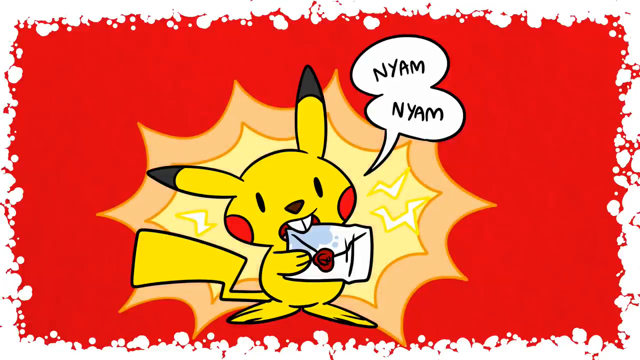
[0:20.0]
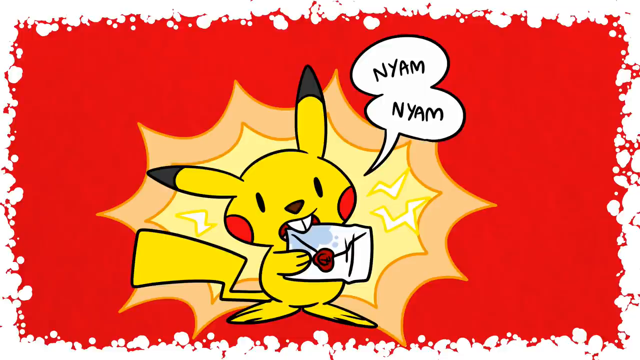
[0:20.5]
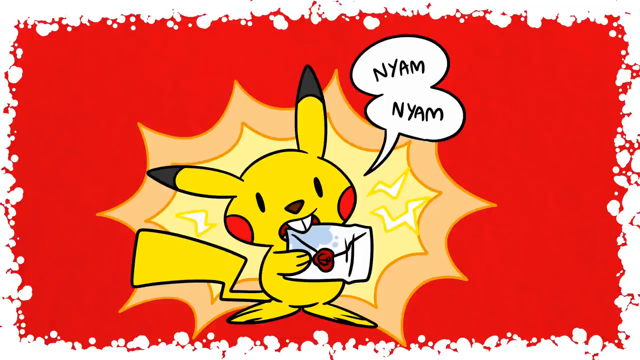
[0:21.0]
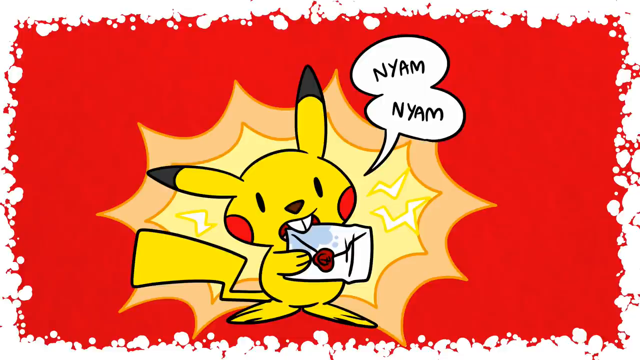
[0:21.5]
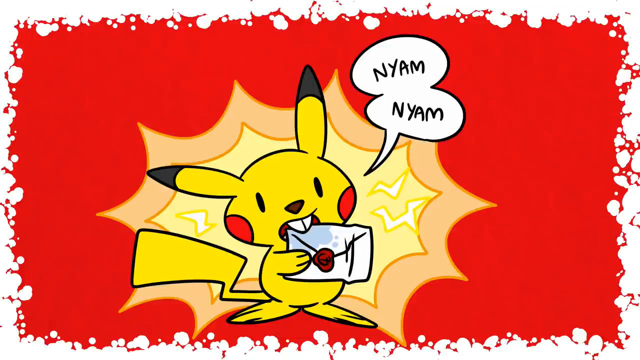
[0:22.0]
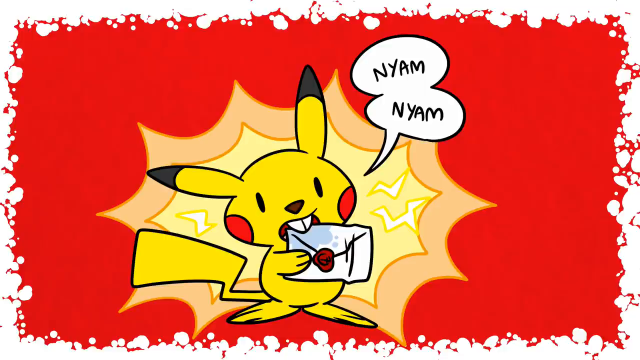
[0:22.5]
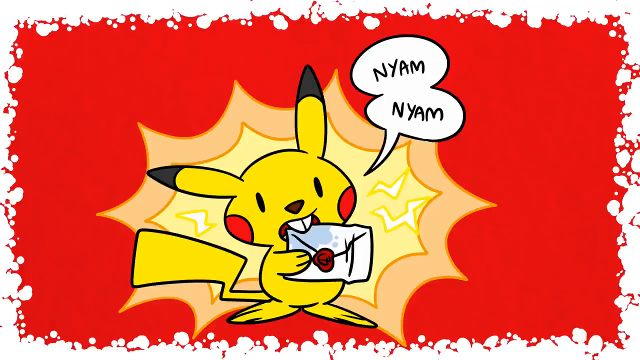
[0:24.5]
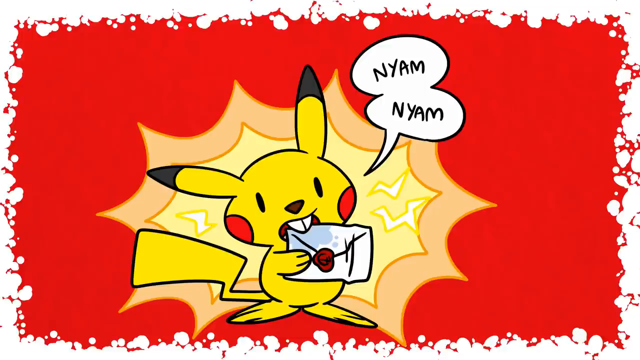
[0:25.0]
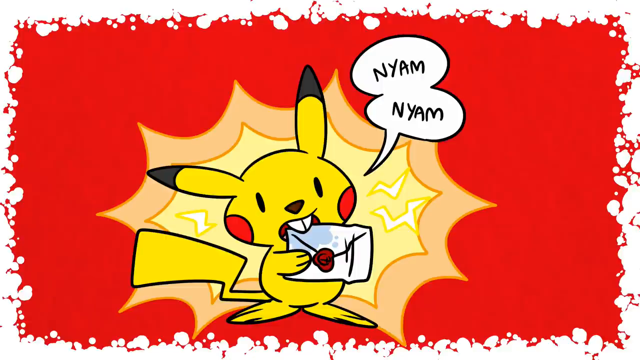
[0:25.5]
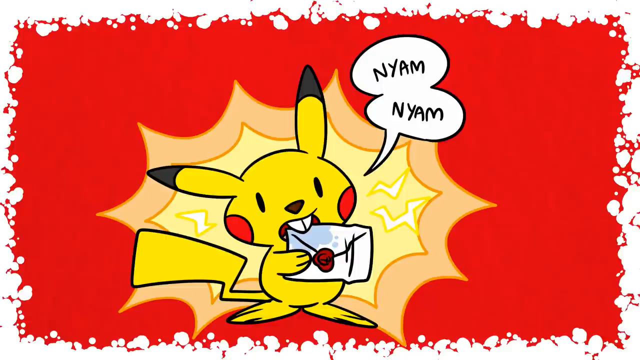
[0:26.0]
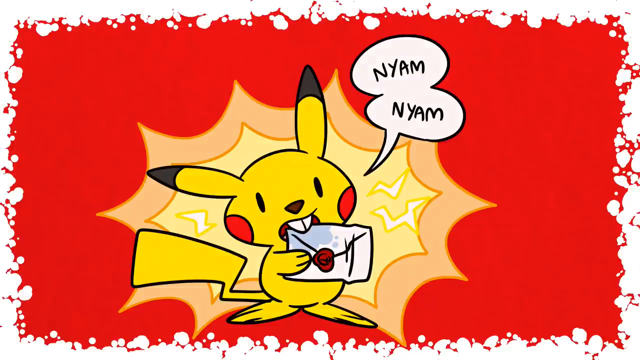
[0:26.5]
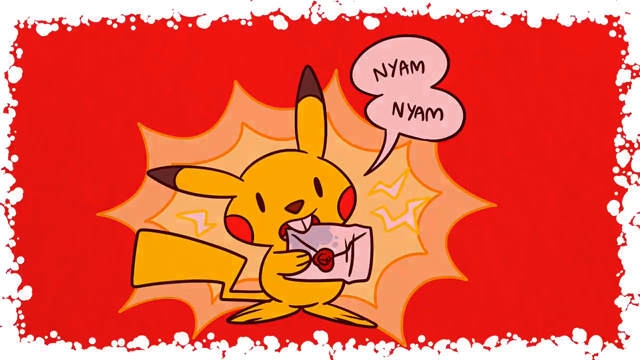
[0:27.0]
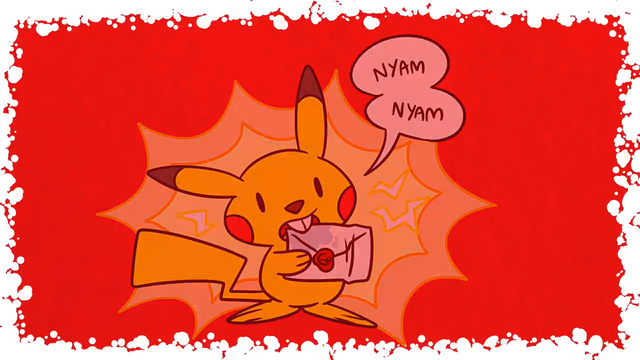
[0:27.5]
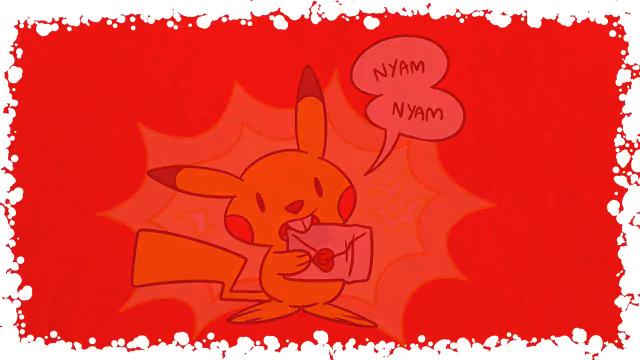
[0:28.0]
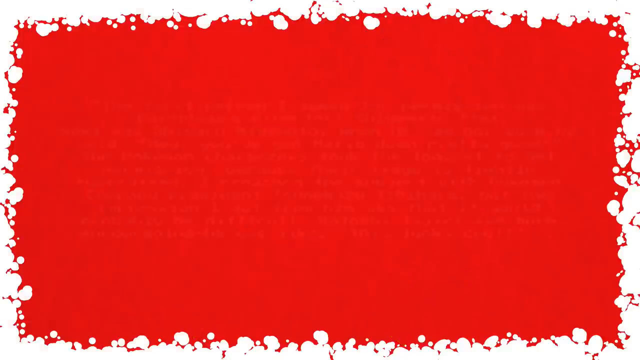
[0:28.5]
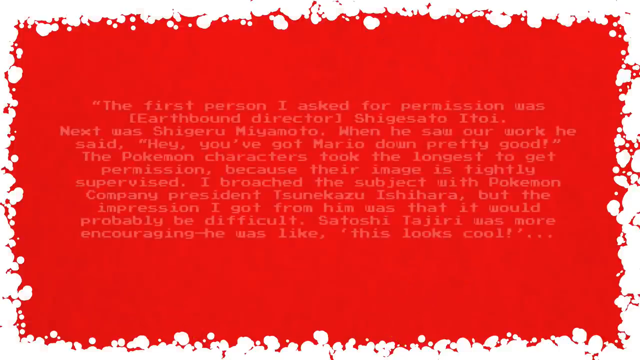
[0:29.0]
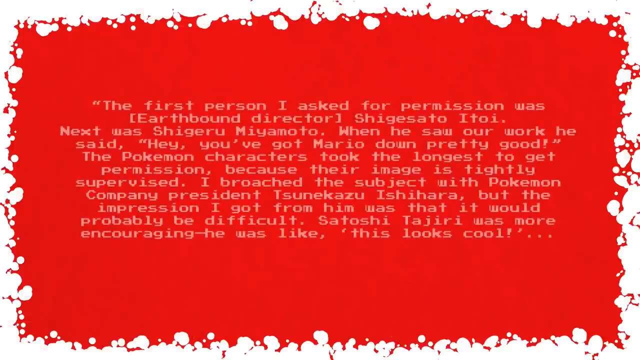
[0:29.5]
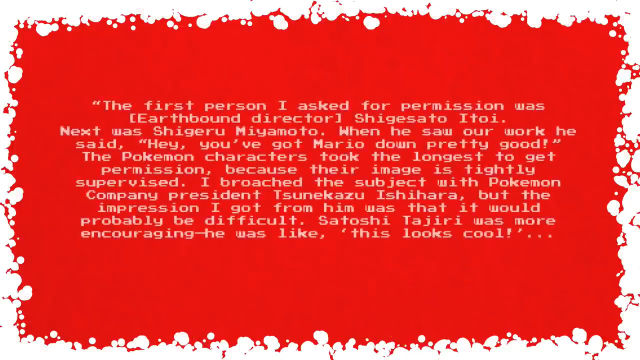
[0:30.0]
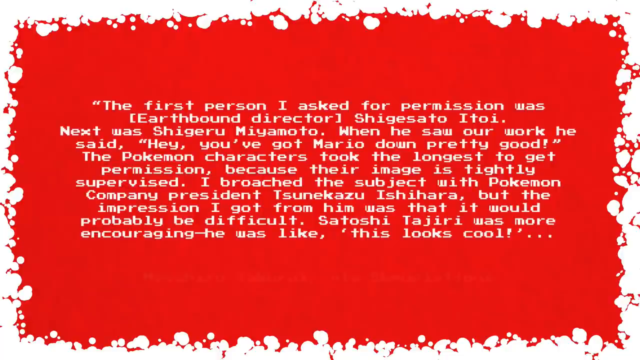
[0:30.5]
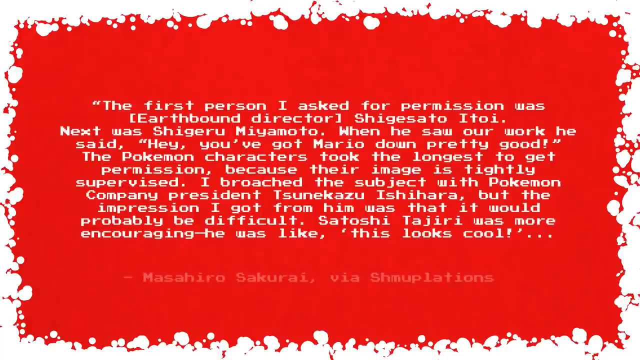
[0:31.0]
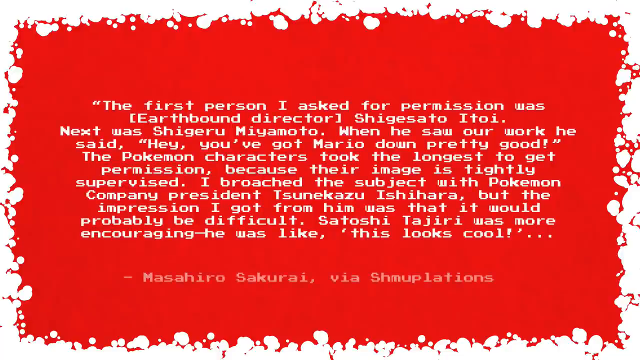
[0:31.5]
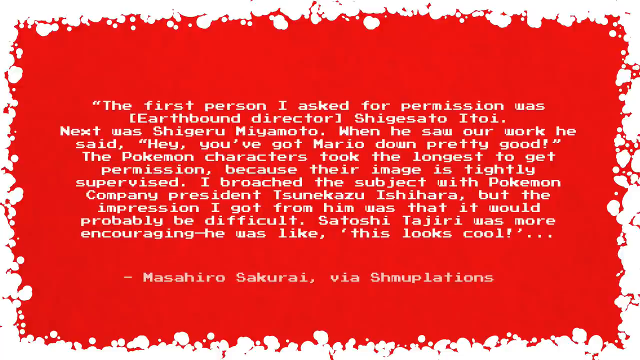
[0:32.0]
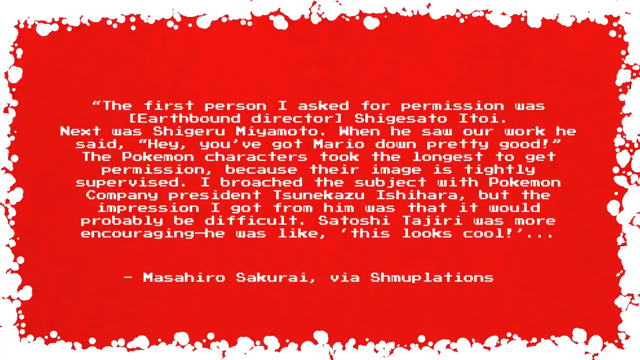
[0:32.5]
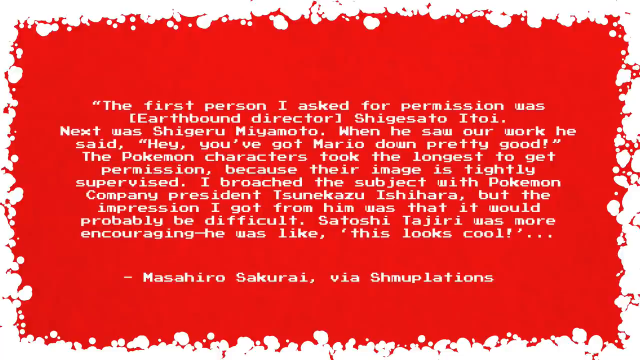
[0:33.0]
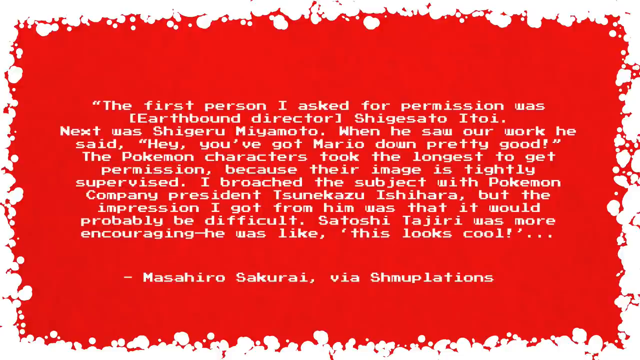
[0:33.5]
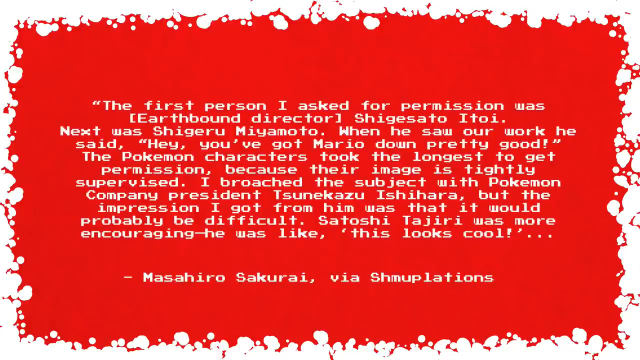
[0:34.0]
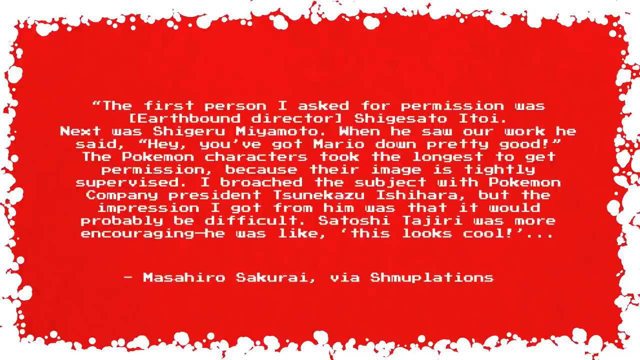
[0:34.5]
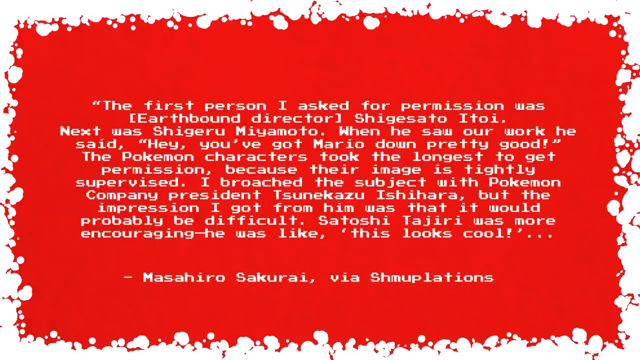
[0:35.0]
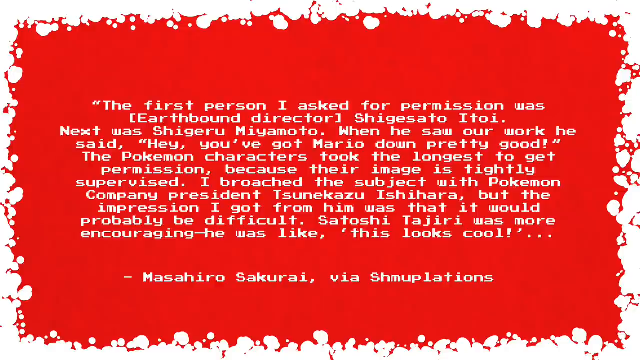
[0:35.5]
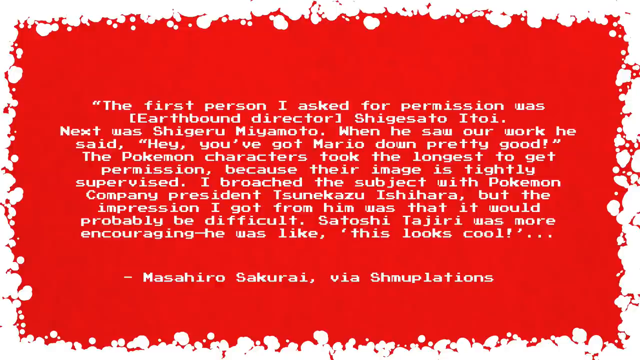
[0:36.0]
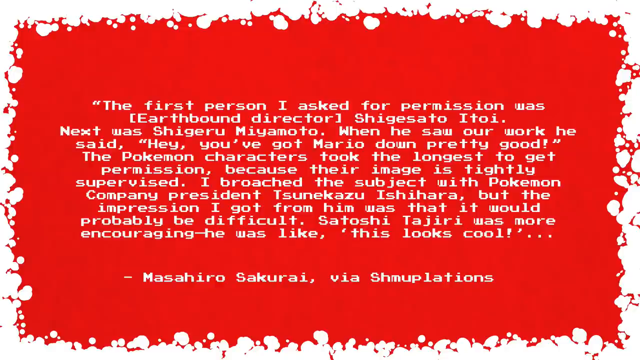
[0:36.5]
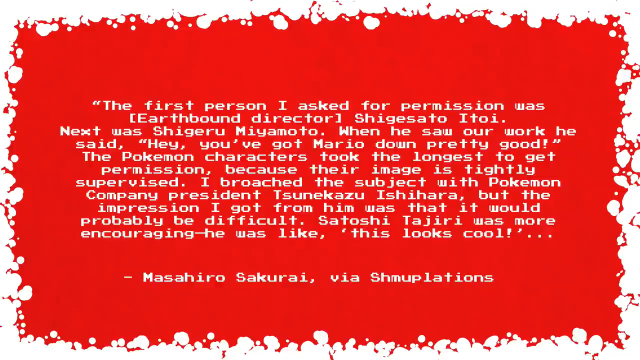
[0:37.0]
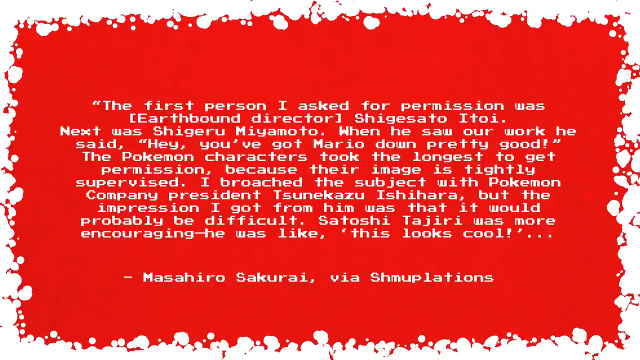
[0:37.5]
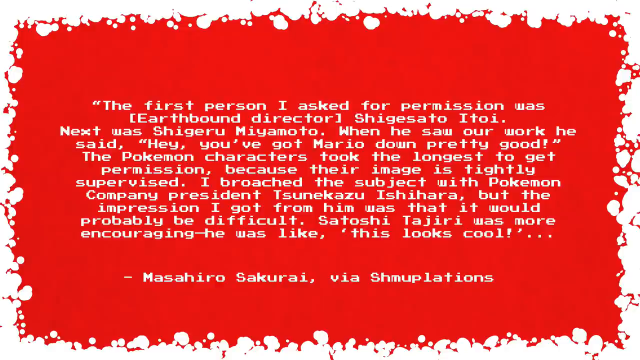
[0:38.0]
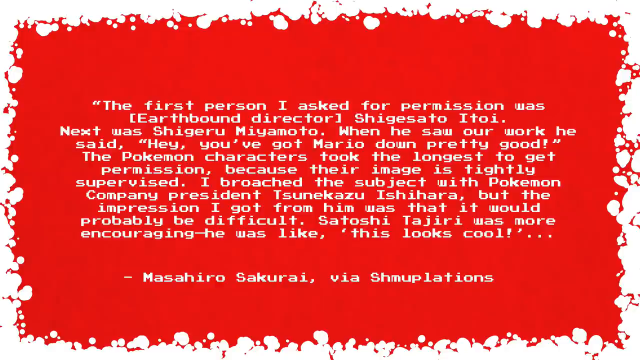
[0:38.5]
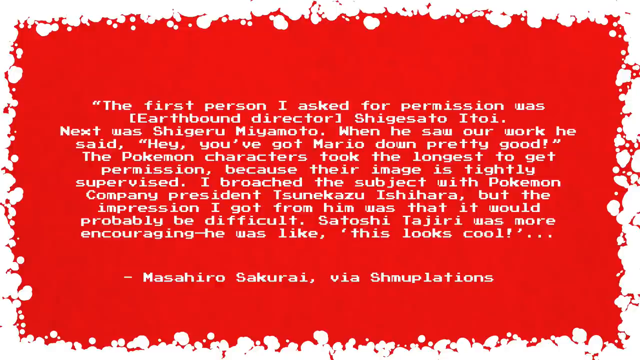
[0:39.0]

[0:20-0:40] On the red background, a Pikachu in the middle of the screen is kind of jolting off electricity around him while chewing on a letter. "Nom nom" appears in text blobs emerging from him. The Pikachu is yellow with a black outline, black-tipped ears and red marks around his chin, and he kind of almost looks like a beaver without his teeth. The letter he is chewing on is white with a kind of red seal on it. This all fades off the screen, and a block of white text comes up reading: "The first person I asked for permission was Earthbound director Shigesato Itoi. Next was Shigeru Miyamoto. When he saw our work he said hey you've got Mario down pretty good. The Pokemon characters took the longest to get permission because their image is tightly supervised. I broached the subject with Pokemon company president Tsunekazu Ishihara but the impression I got from him was that it would probably be difficult. Sotashi Tajiri was cool, encouraging. He was like this looks cool. Masahiro Sakurai via Shmuplation."